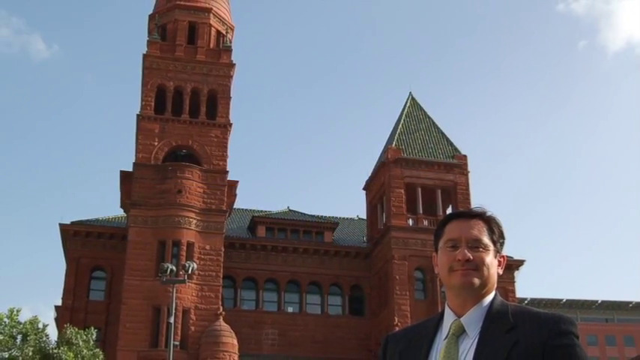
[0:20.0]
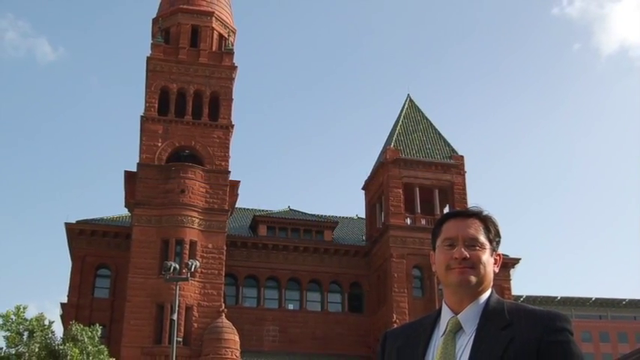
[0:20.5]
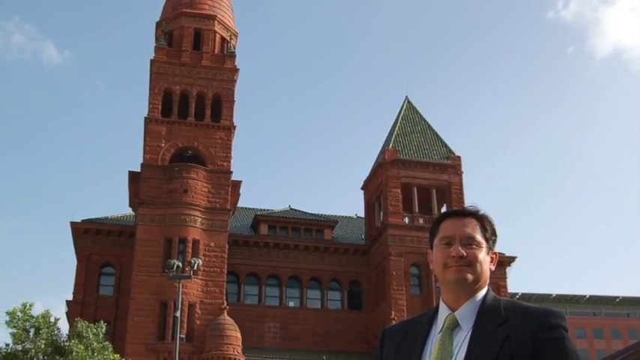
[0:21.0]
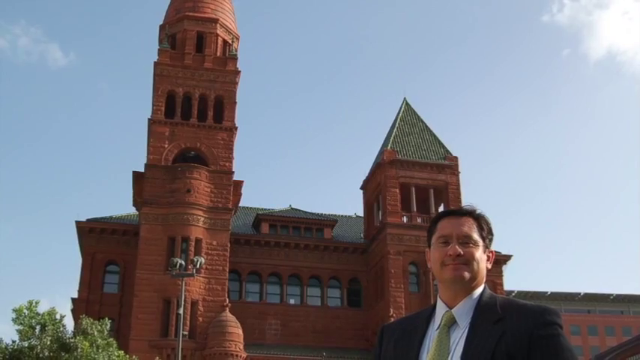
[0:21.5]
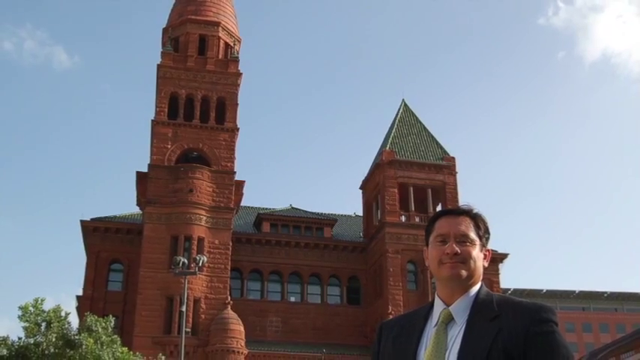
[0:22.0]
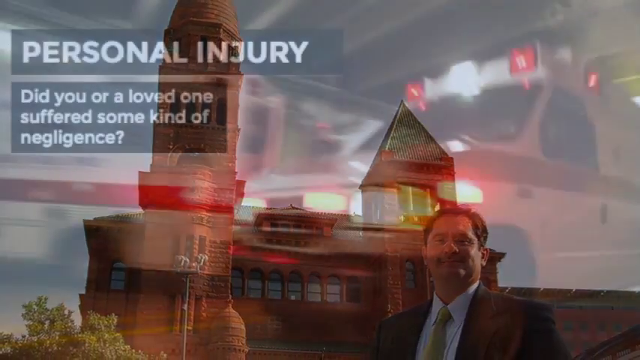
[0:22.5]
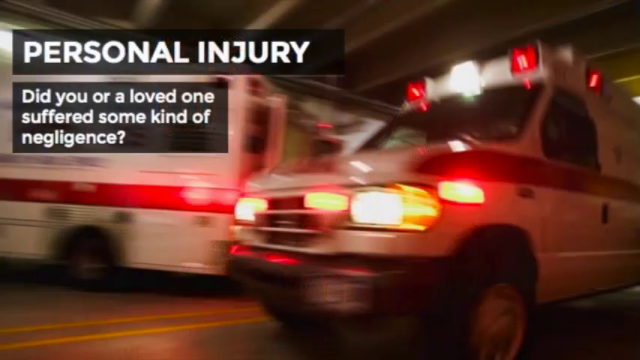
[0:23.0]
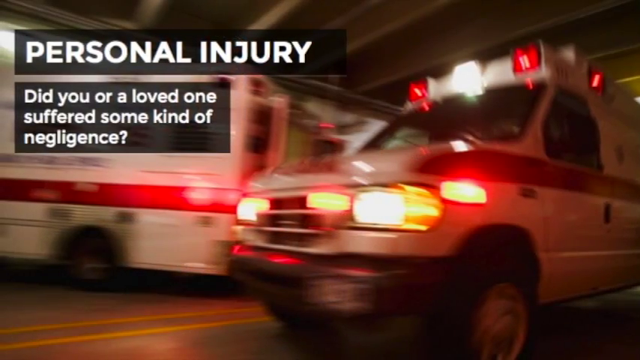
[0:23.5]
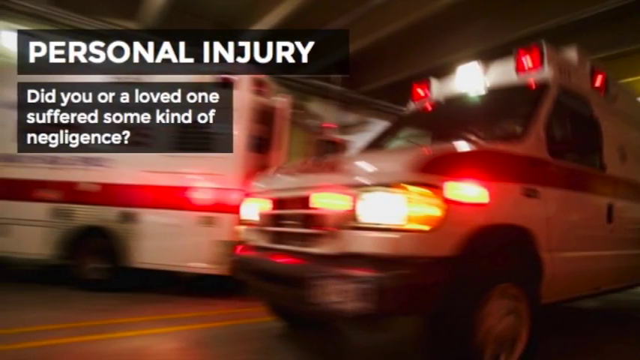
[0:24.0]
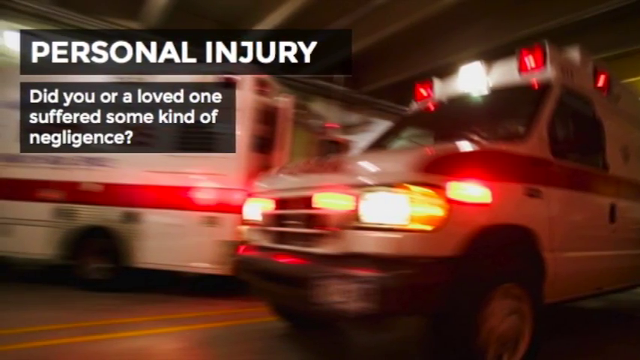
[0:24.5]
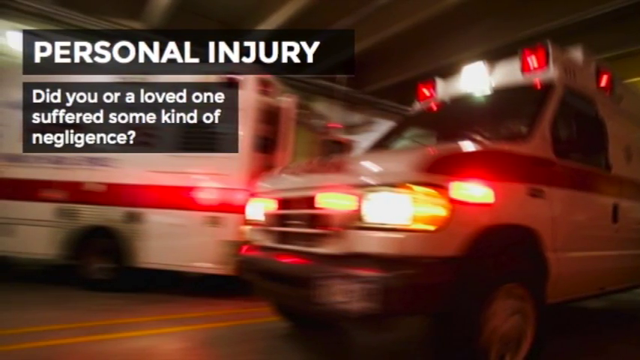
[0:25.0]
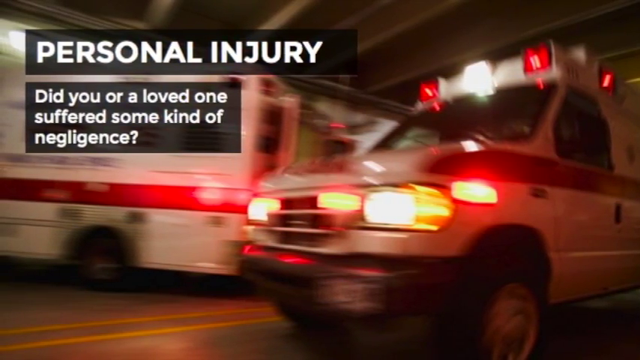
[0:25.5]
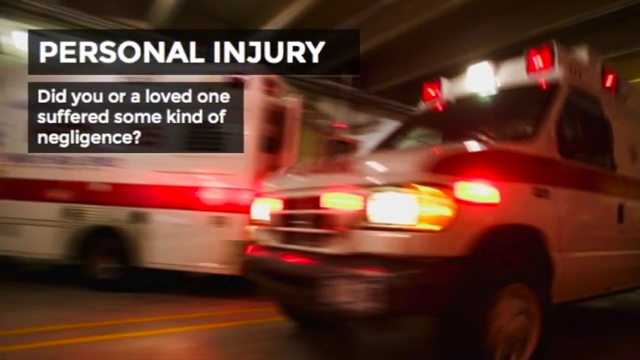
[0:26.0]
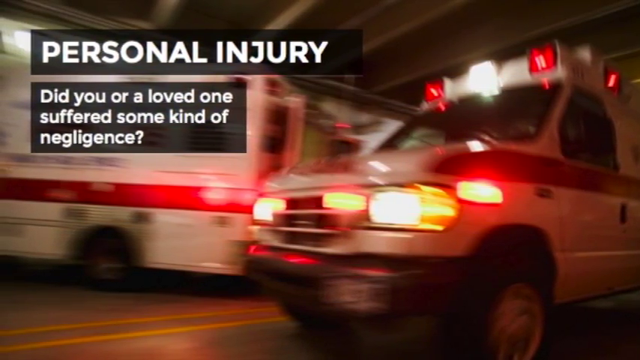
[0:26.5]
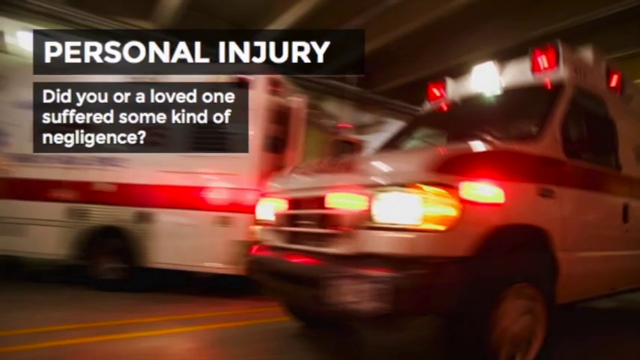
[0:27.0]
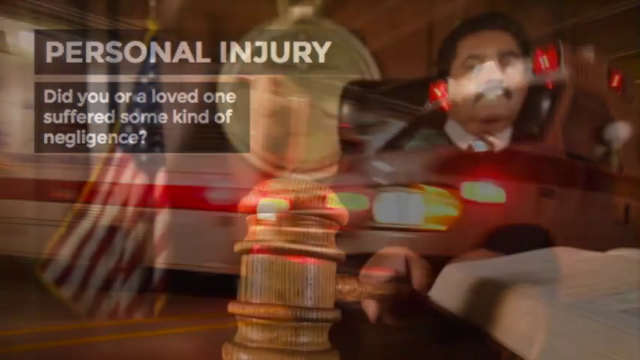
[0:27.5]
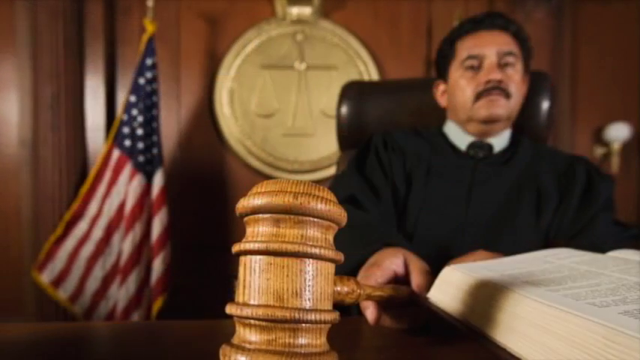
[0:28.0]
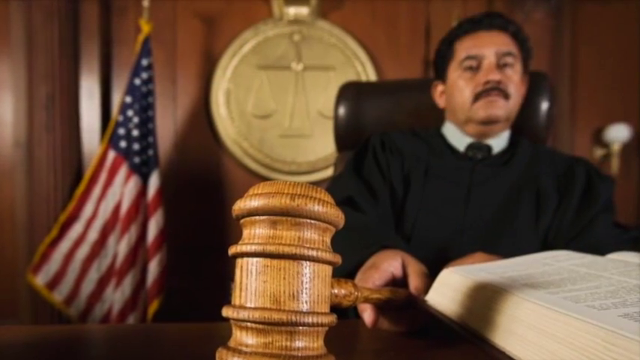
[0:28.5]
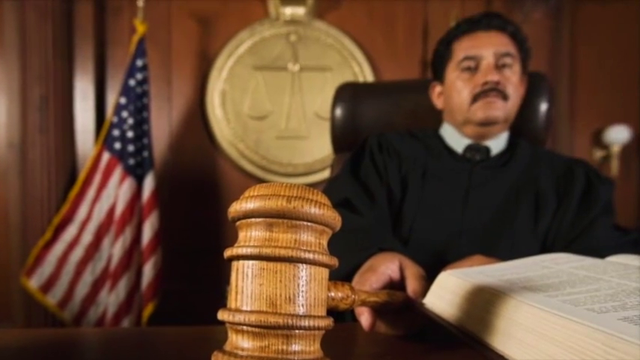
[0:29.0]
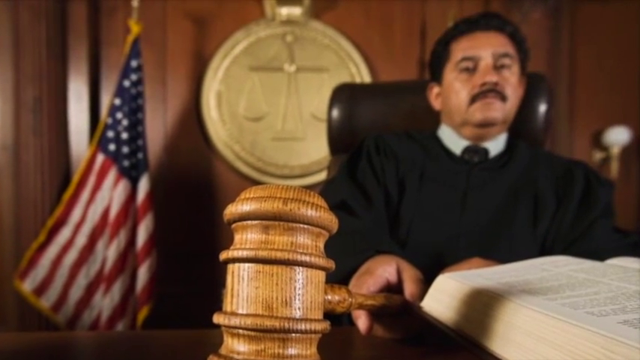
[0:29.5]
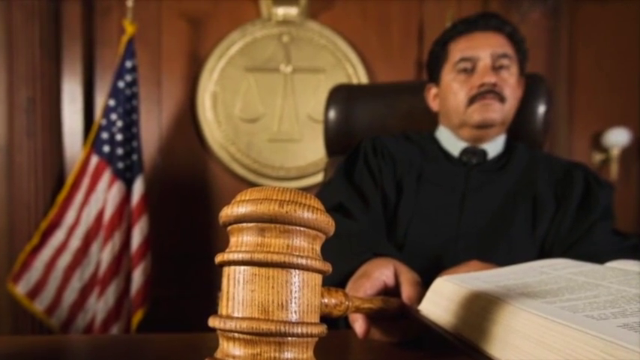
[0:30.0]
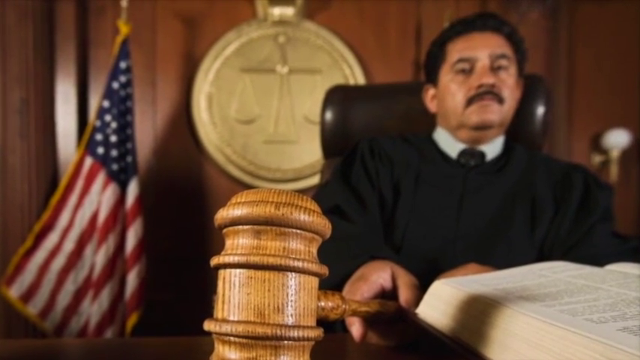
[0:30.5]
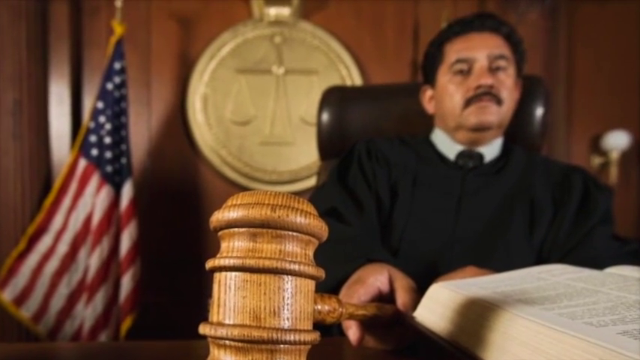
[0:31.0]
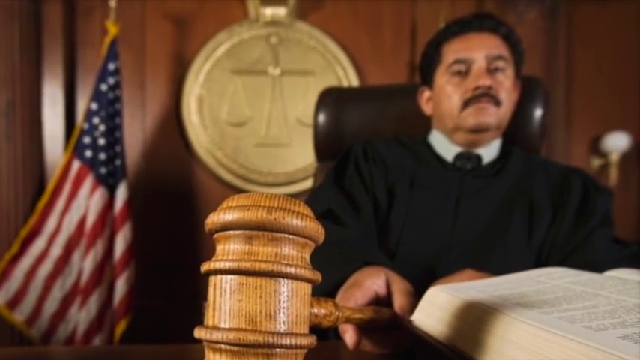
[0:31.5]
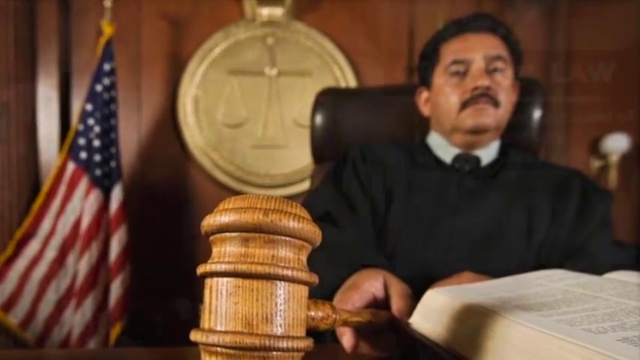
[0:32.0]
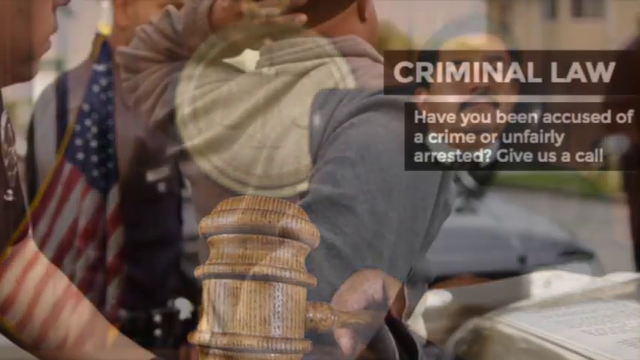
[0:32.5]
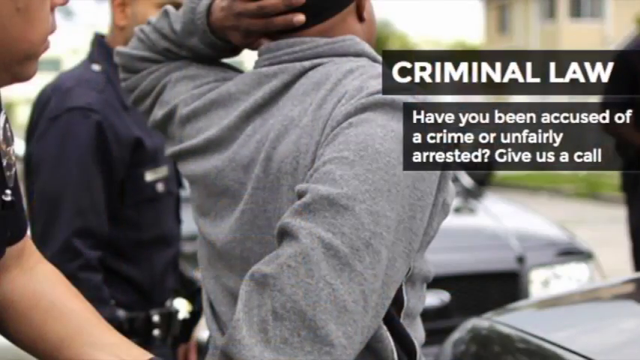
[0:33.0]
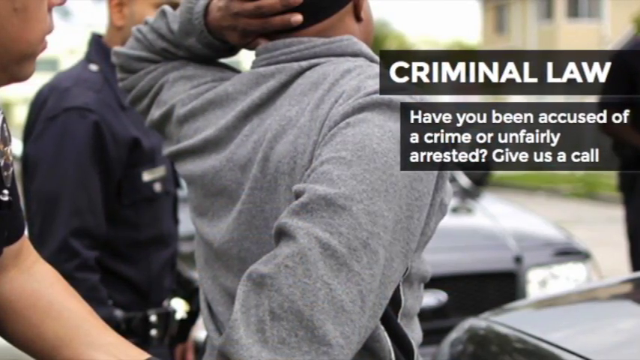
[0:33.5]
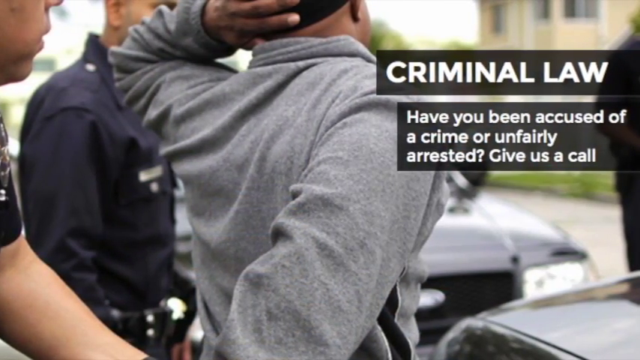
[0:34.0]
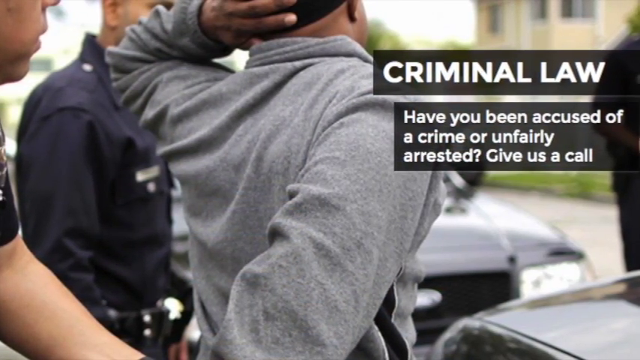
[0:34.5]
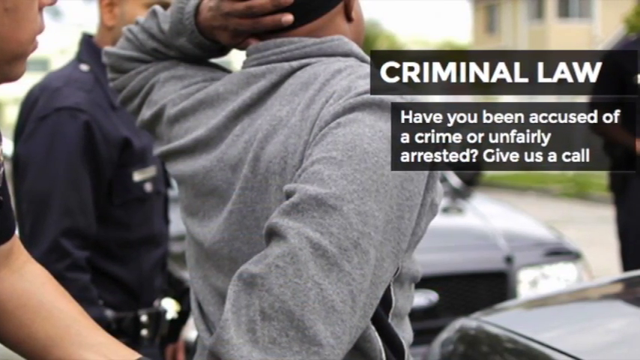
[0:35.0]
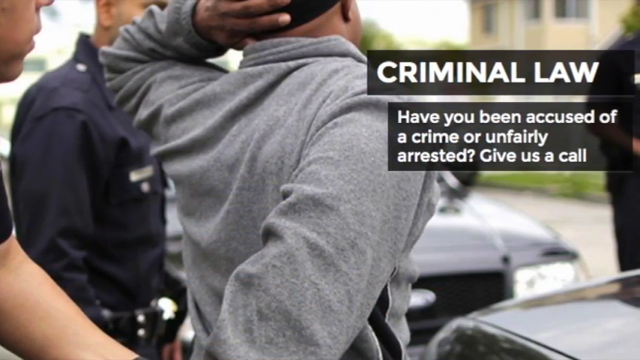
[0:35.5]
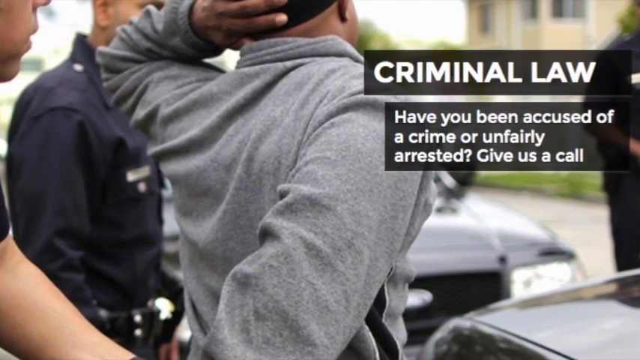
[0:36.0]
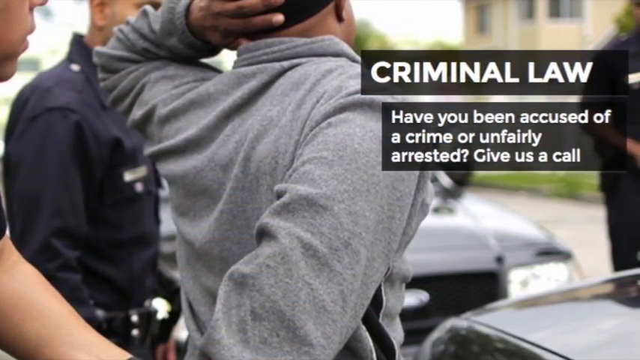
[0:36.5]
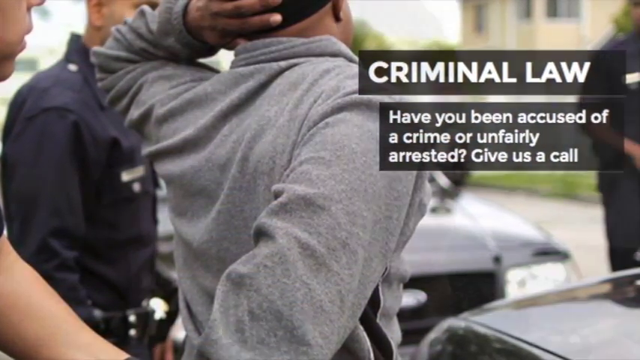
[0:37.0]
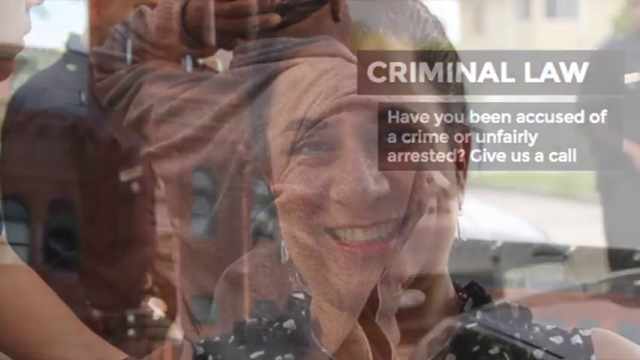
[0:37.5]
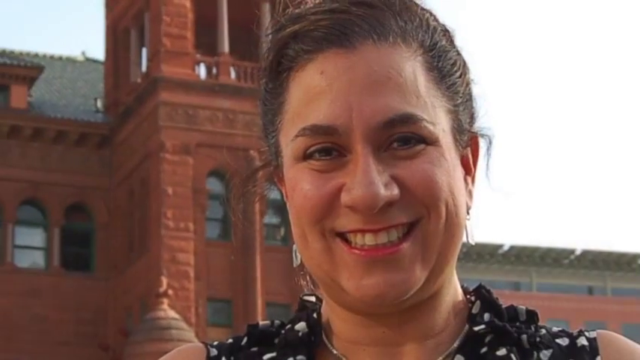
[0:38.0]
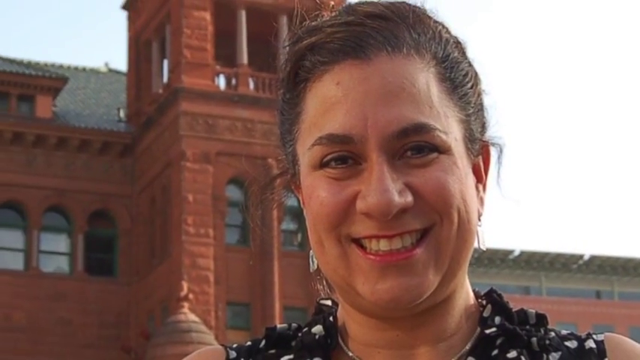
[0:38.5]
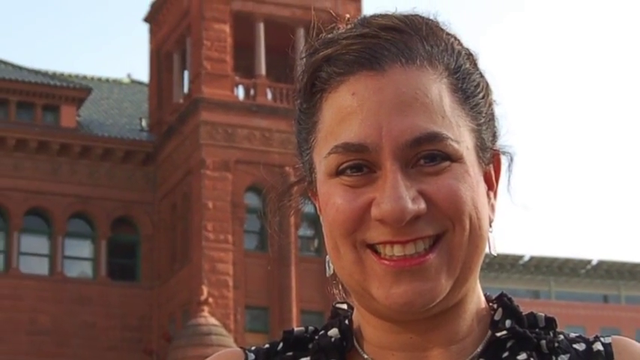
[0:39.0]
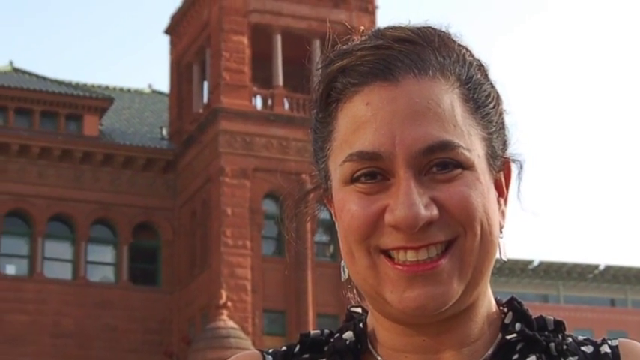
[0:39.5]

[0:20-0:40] A photo shows the husband standing in front of a building, possibly the attorney building they work out of. The scene changes to ambulances that look to be in motion, judging by the blurriness of the photo. Two ambulances are visible: one faces with its front more toward the center of the screen, while the other is off the screen toward the left side, with only its back visible. In the top left, "personal injury" appears in white lettering on a black shaded box, and underneath, in smaller white lettering on a black shaded box, it reads "did you or a loved one suffered some kind of negligence". The video zooms toward the left side, then transitions to a judge pushing a gavel down on the table. A crest in the back indicates some type of court system, and an American flag is on the left side. The shot zooms in toward the judge, a man with a mustache. The next scene reads "criminal law" in white lettering, followed by "have you been accused of a crime and or unfairly arrested? give us a call", also in white lettering. The segment ends with a photo of the wife of the firm.